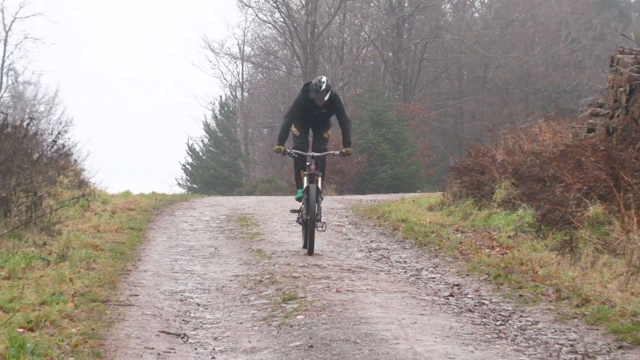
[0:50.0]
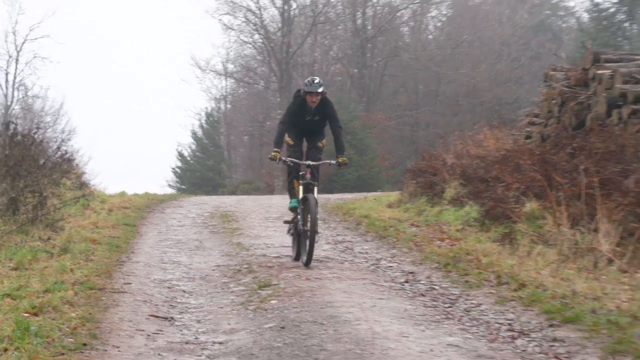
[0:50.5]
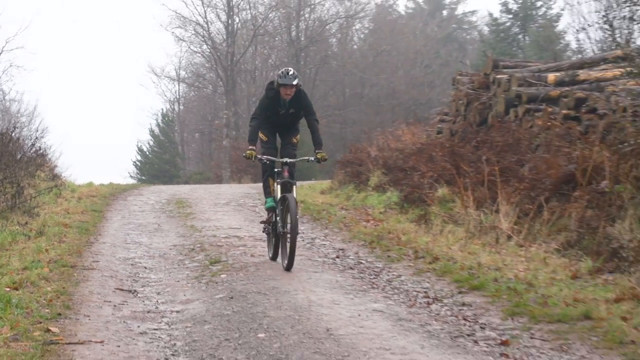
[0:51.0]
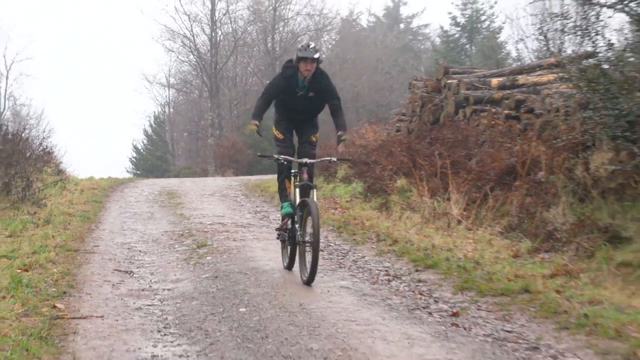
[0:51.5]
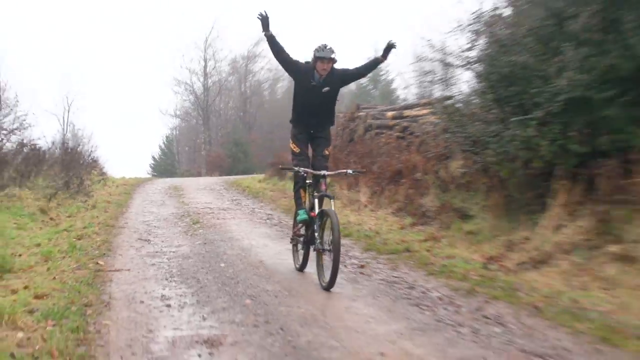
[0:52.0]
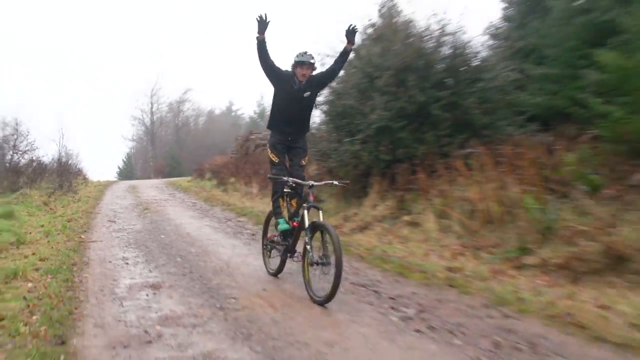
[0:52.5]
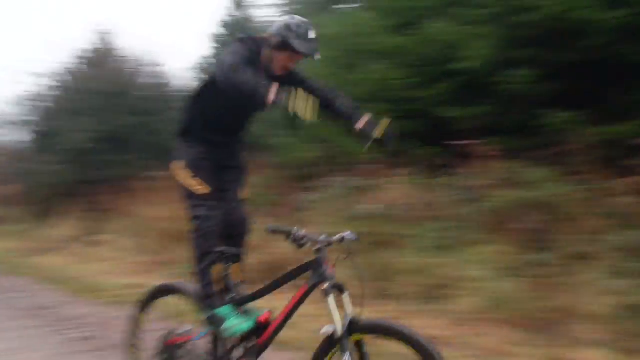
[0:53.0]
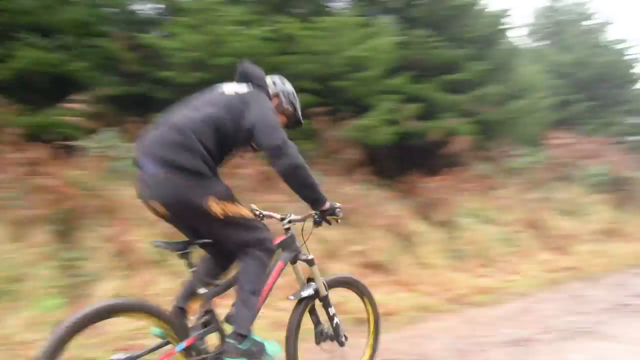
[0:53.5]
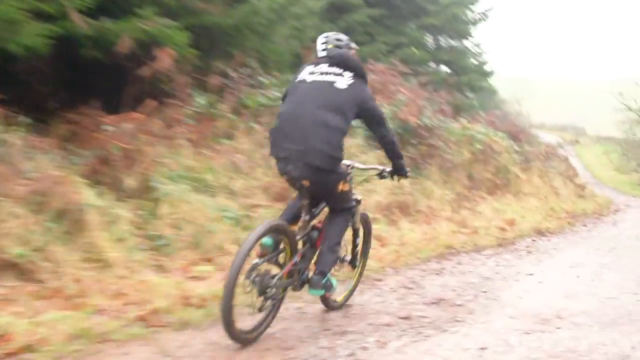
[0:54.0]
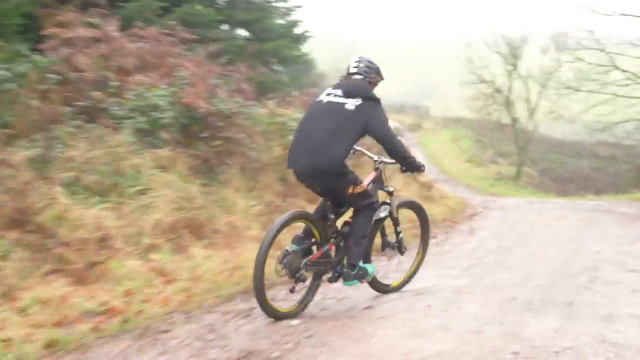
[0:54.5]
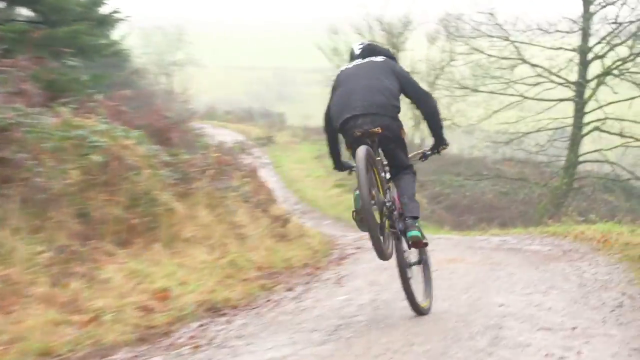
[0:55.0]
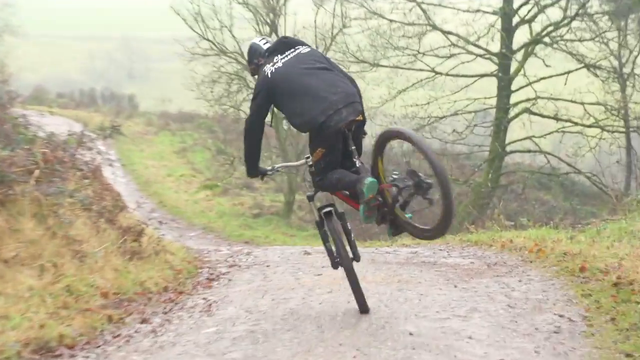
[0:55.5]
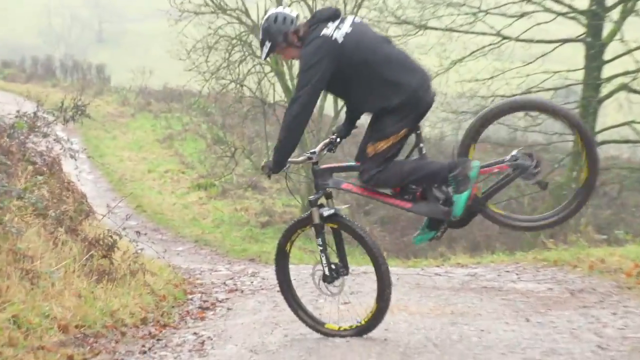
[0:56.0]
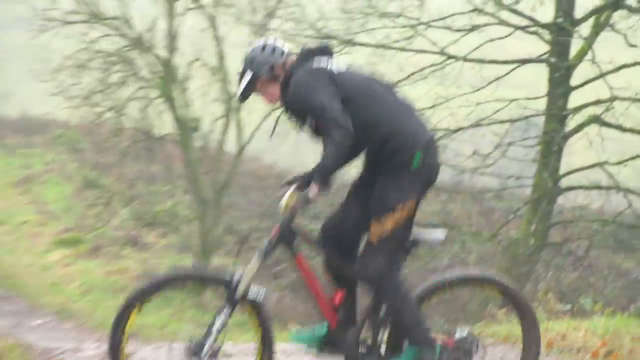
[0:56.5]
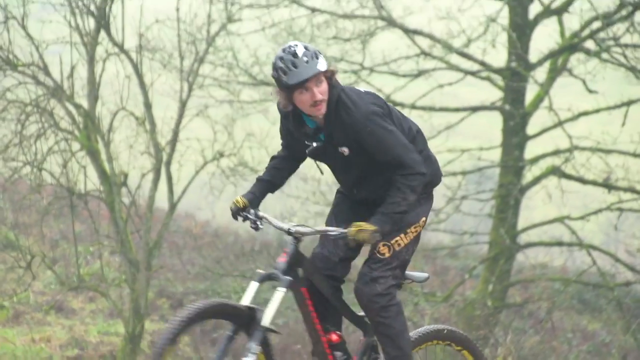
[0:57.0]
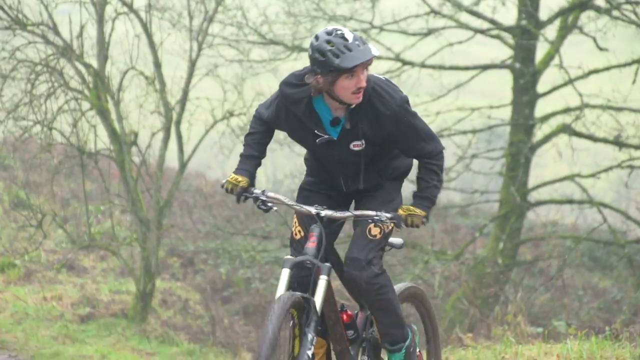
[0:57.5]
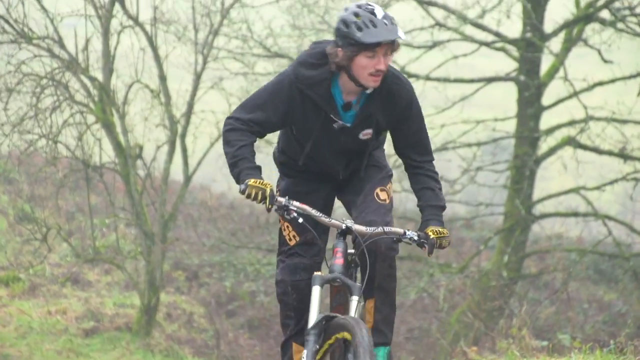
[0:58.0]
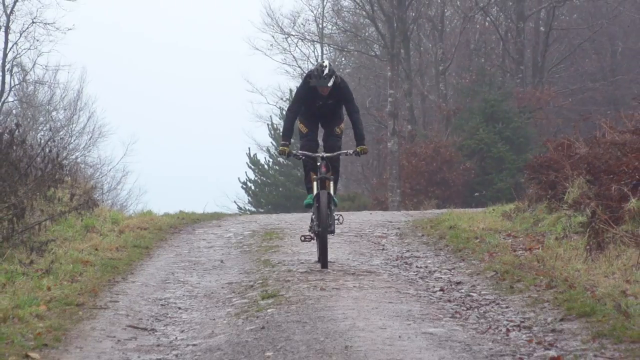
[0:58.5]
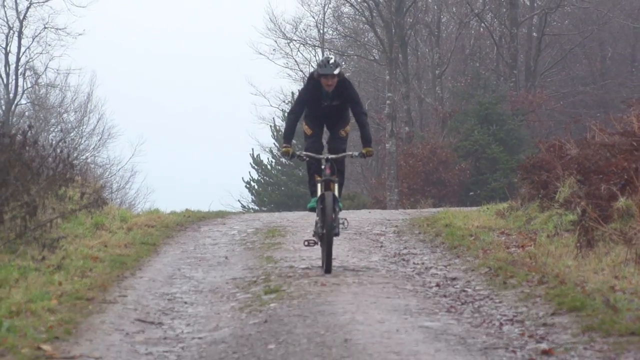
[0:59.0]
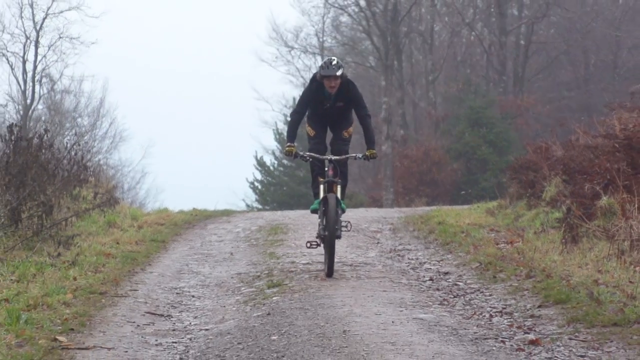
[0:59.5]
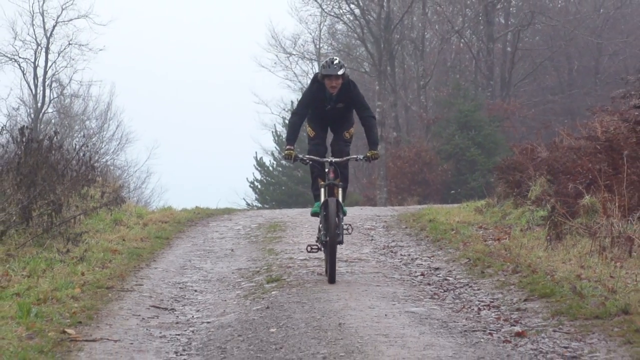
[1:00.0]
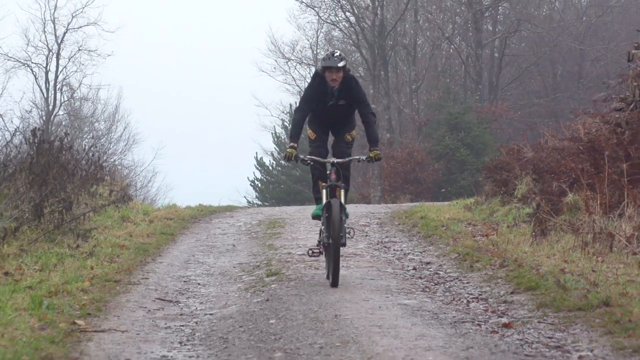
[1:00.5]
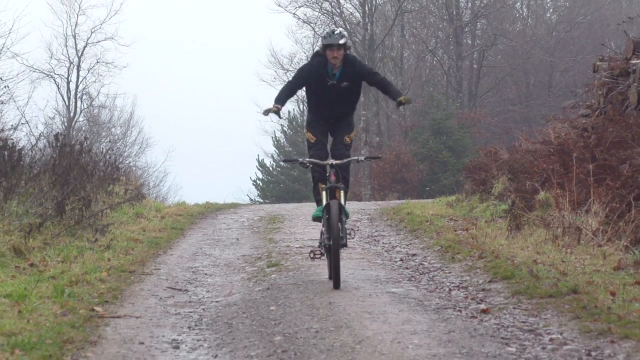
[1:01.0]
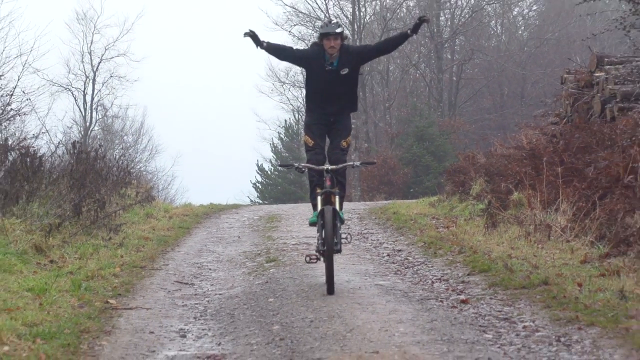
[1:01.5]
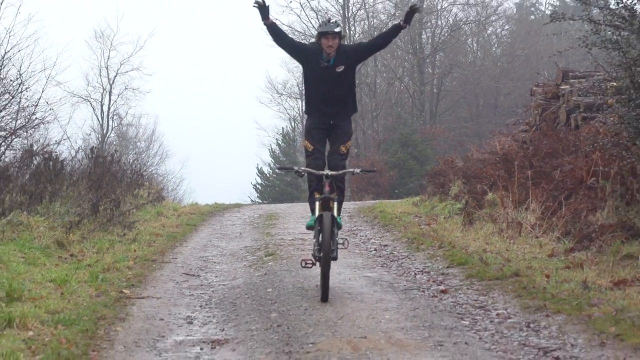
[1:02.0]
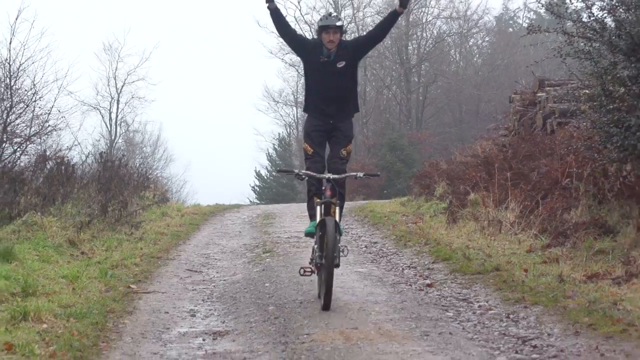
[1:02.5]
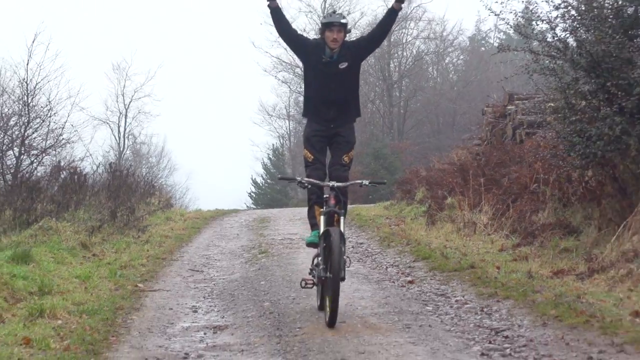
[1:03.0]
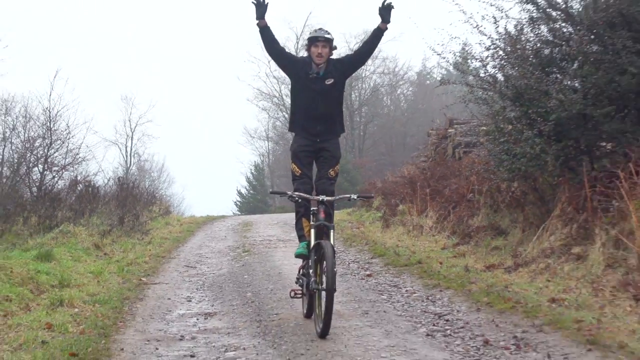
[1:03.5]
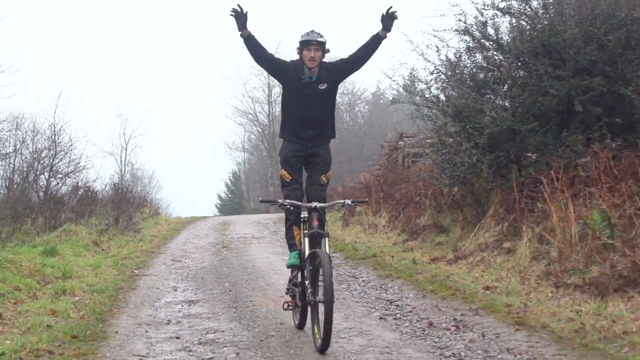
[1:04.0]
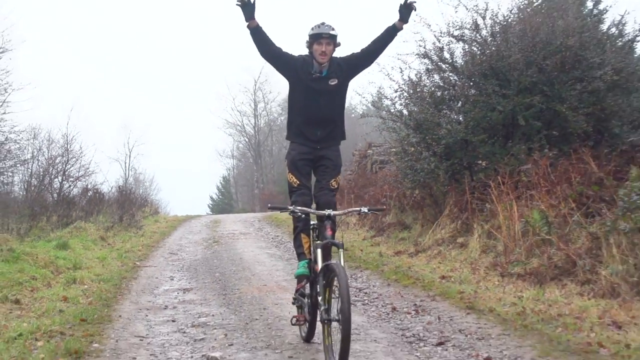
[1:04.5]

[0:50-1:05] A guy goes down a hill standing up on a bike with his feet up and his hands up. At the bottom of the hill he goes on one wheel and does what looks like a spinning trick. He looks pretty skilled and professional with the tricks. He wears all black except for blue, teal-colored and black shoes, has yellow words on the back, and seems to have a blue shirt underneath his jacket.